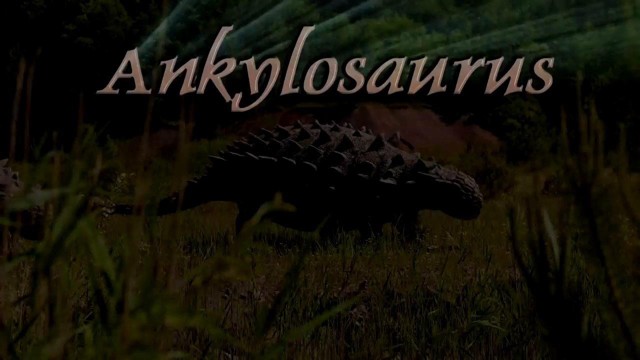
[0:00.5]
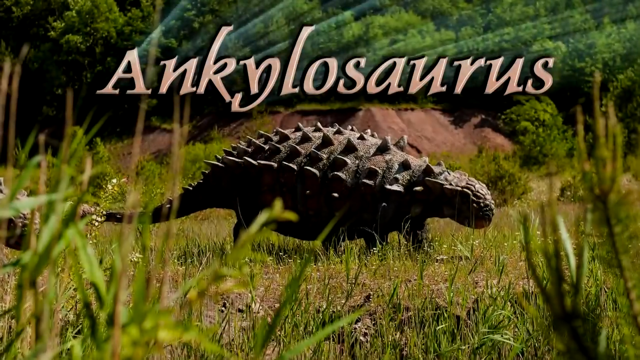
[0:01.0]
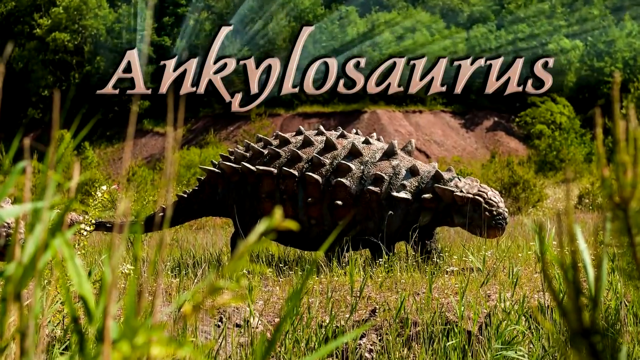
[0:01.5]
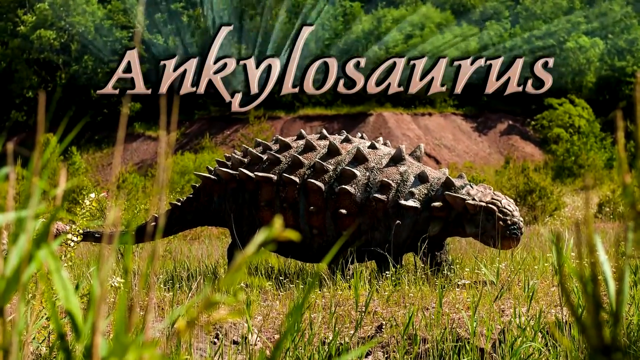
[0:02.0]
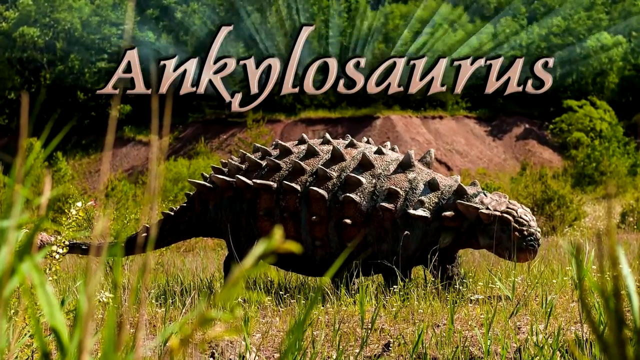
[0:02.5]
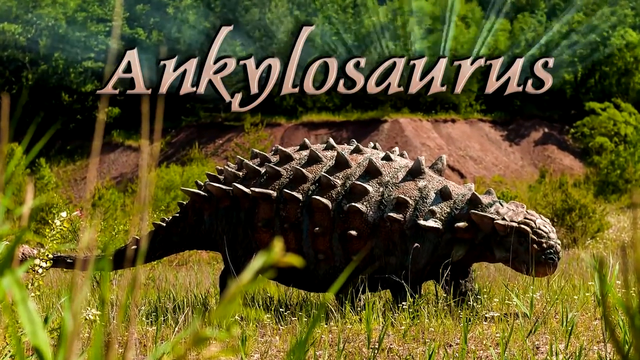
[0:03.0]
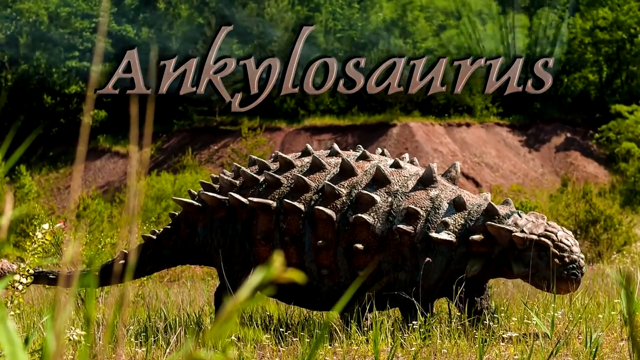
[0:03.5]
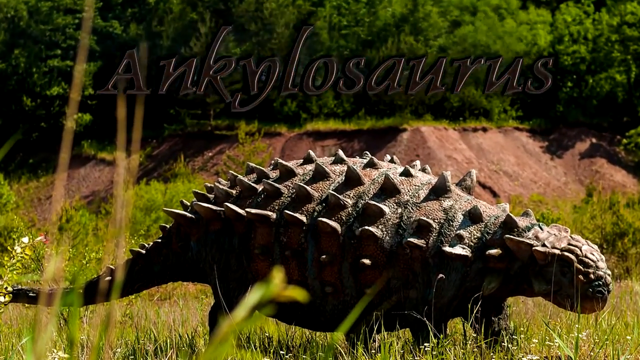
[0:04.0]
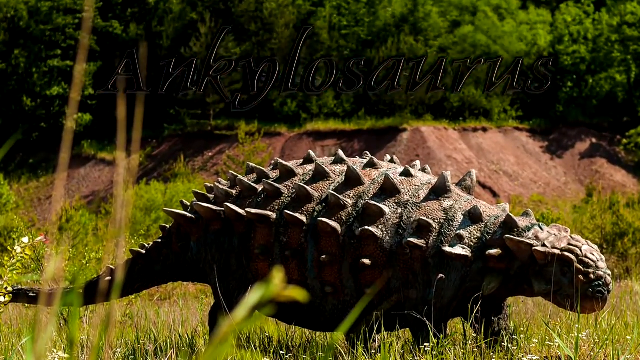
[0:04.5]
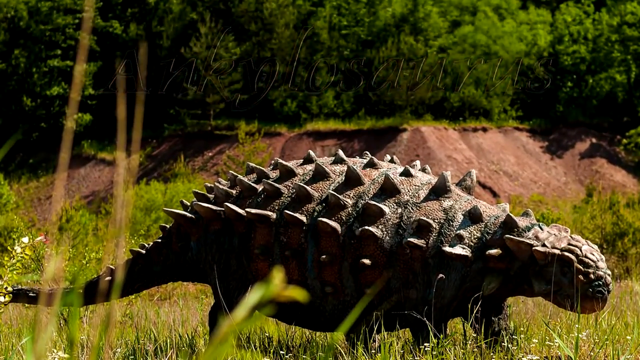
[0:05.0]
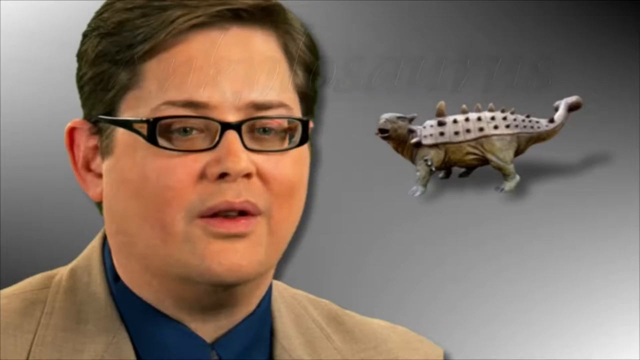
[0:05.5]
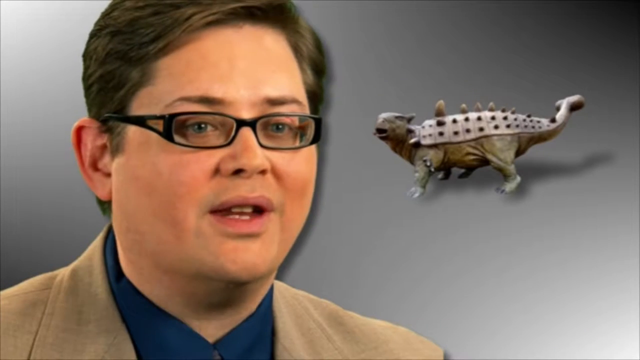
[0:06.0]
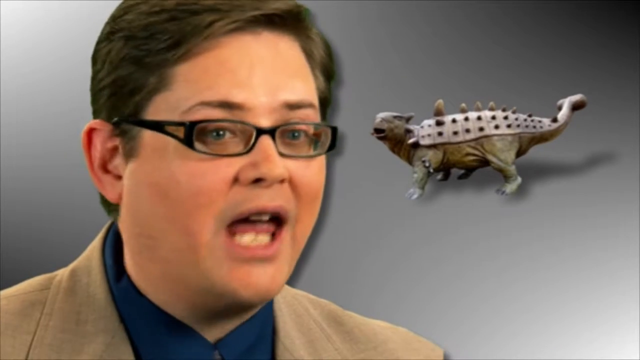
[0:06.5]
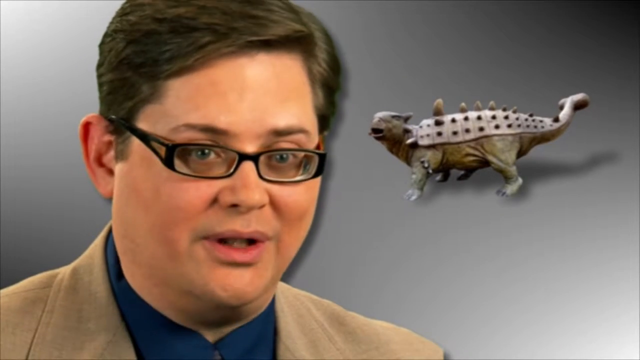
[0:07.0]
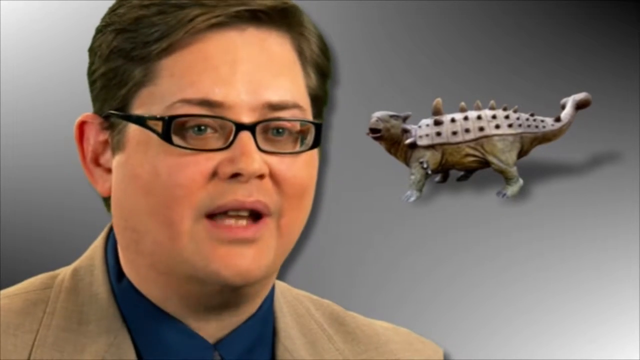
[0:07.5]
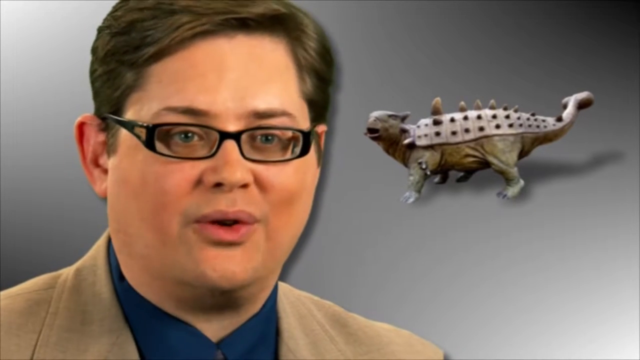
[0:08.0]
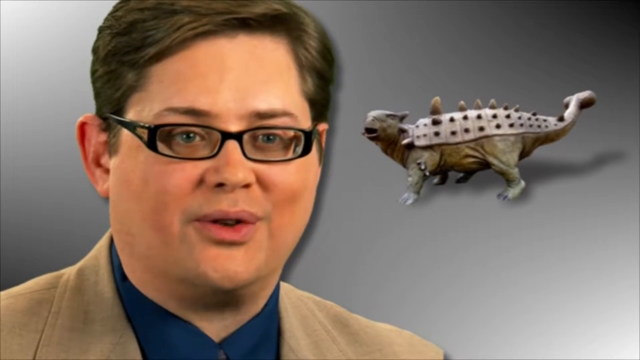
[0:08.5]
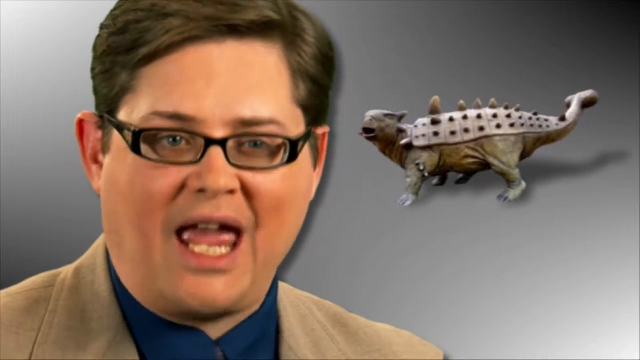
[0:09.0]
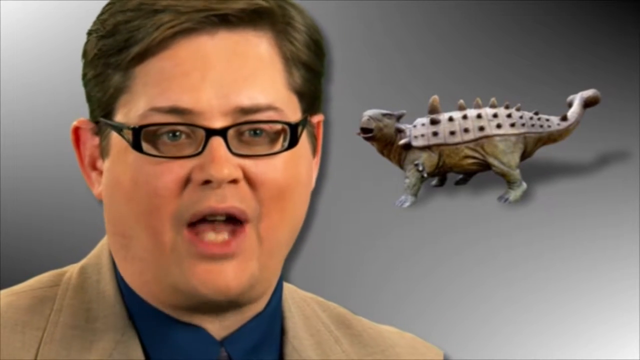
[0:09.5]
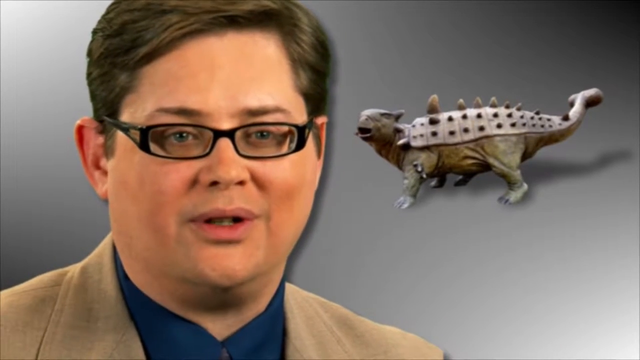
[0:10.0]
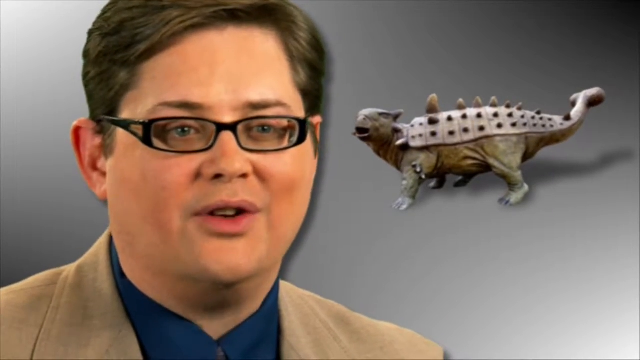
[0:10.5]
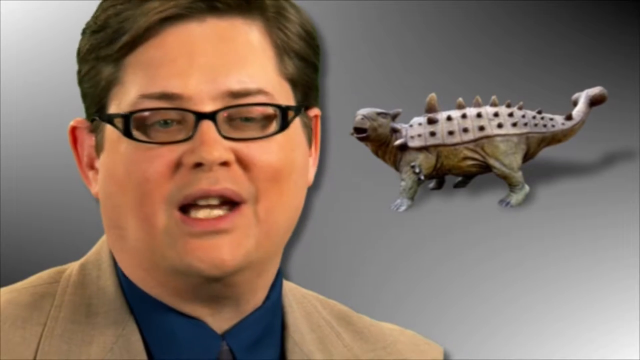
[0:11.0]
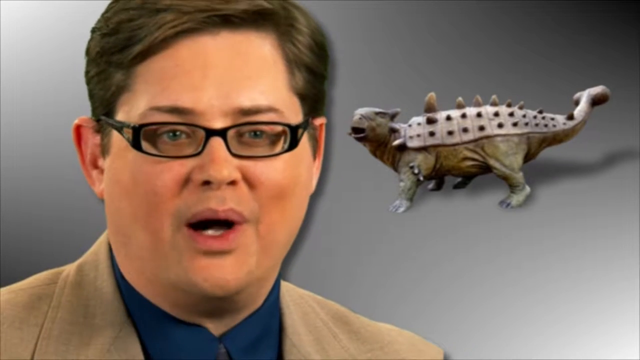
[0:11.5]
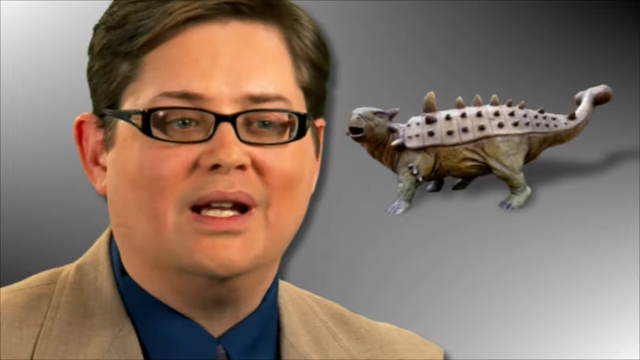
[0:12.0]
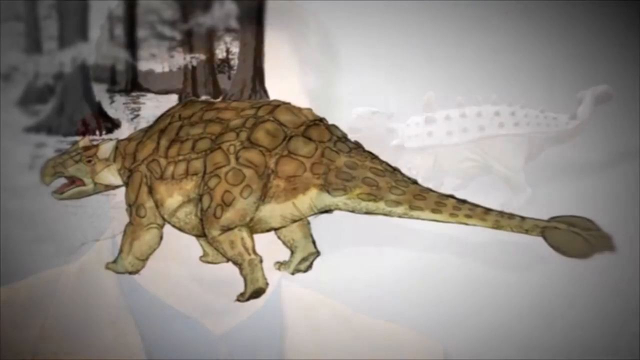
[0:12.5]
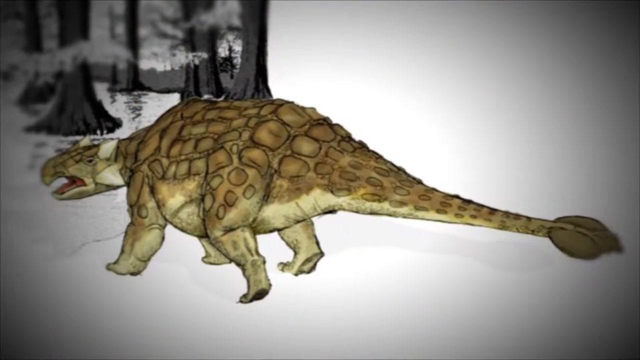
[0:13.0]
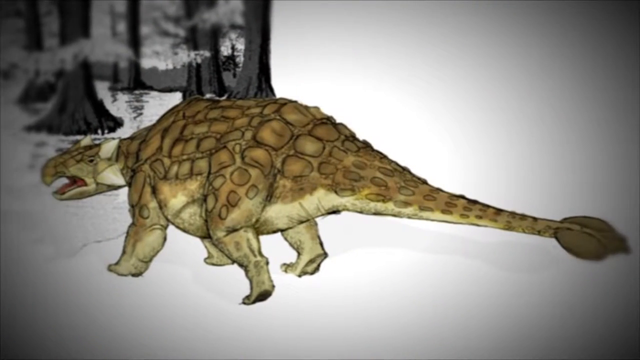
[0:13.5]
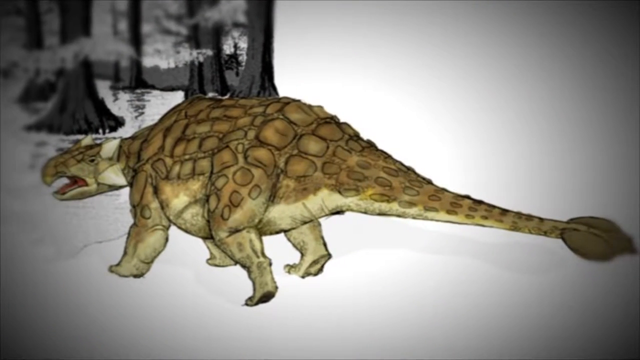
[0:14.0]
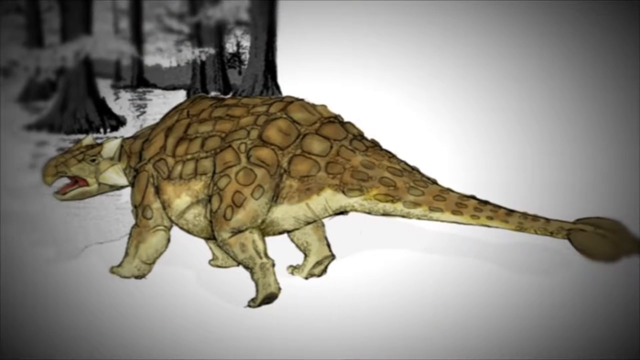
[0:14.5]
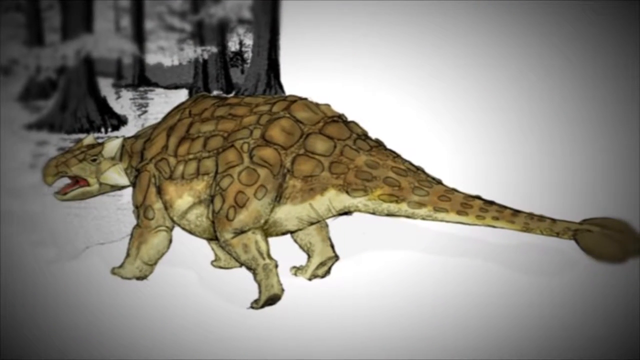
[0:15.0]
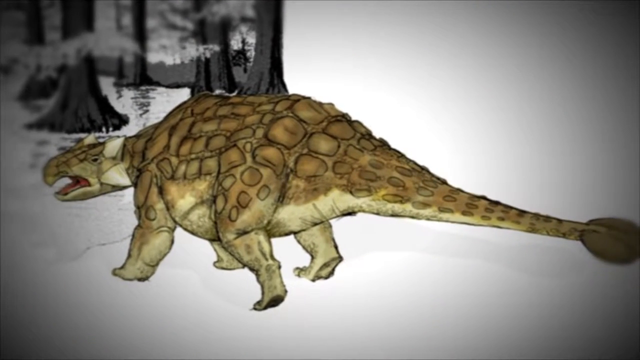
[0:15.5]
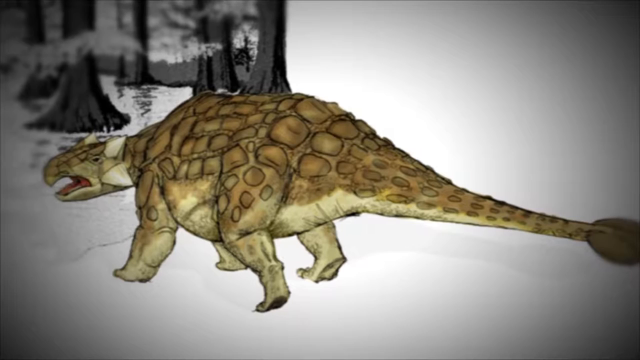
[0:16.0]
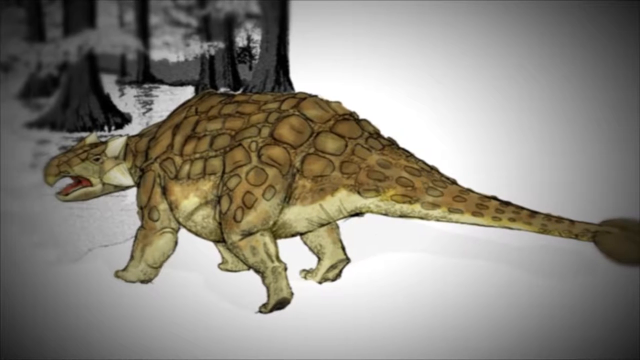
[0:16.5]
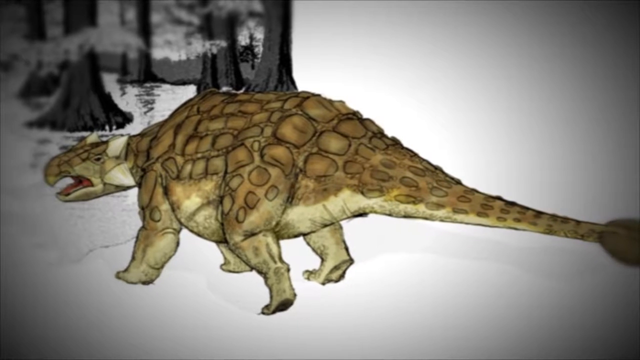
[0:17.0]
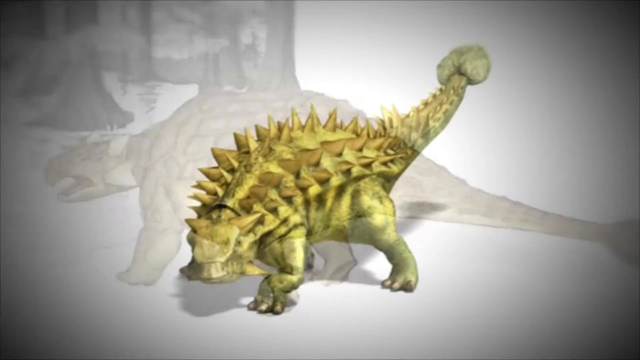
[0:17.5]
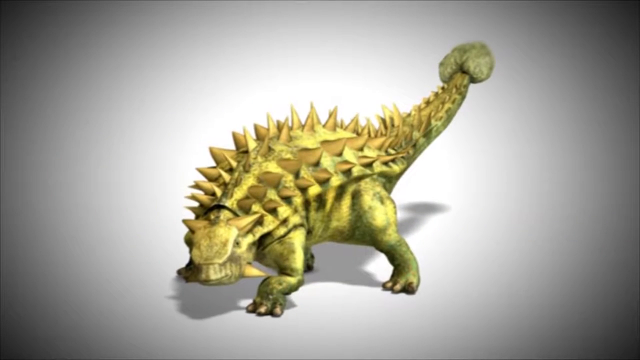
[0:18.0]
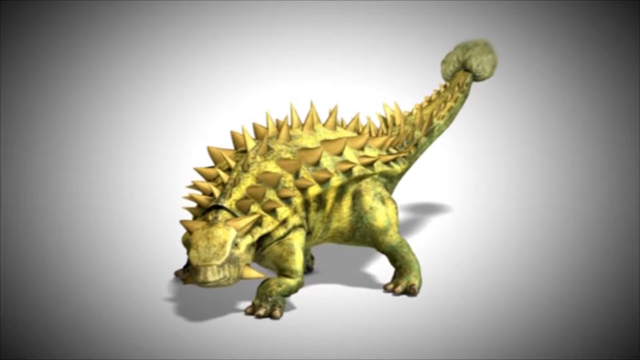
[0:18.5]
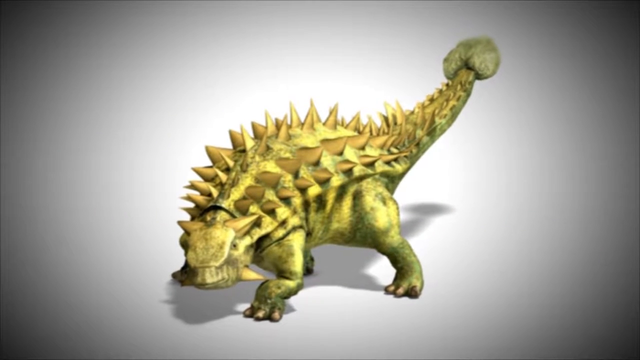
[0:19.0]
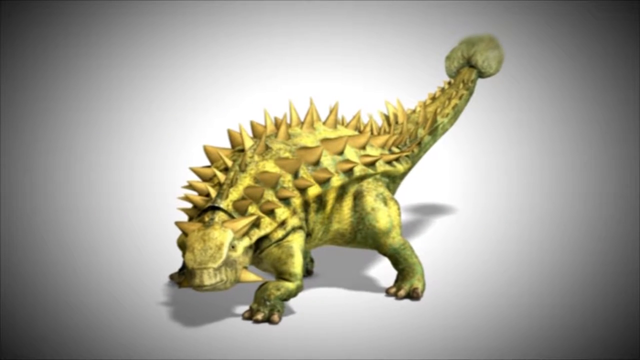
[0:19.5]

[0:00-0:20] A dinosaur is shown, with its name, "Ankylosaurus," displayed on top of the scene in tan letters. The dinosaur has lots of pointy scales covering its back and extending into its long tail, short stubby legs, and an oval-shaped body. Its head is small, with spikes extending out from either side that seem to be its ears. The animal walks through a grassy landscape with a pile of dirt and large trees behind. An animated light comes out from the "Ankylosaurus" text, and the picture is zoomed in on. A small eye is visible on the side view of the animal's head. The "Ankylosaurus" text fades out. Next, a man speaks to the camera. He wears a tan suit with a blue undershirt and small black glasses. Behind him is a gray screen with another image of the dinosaur next to him. A drawing of the dinosaur is then displayed: its top is a darker color than its belly and head, its mouth is open, its snout comes to a point, and there is a large round part at the tip of its tail.